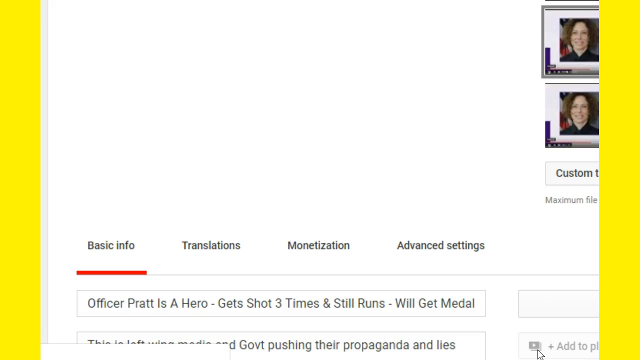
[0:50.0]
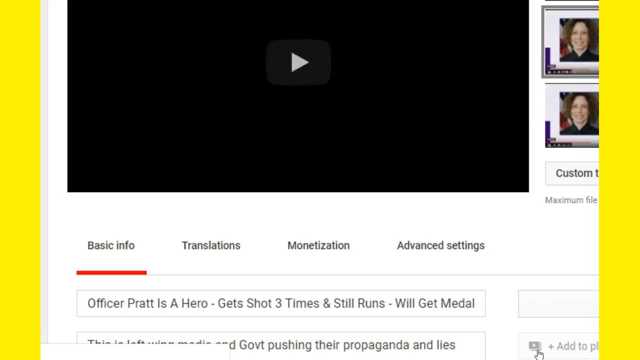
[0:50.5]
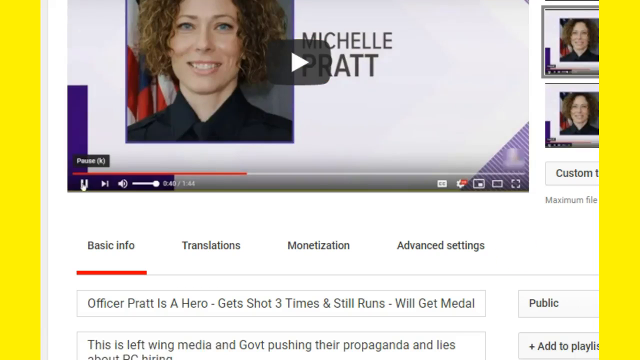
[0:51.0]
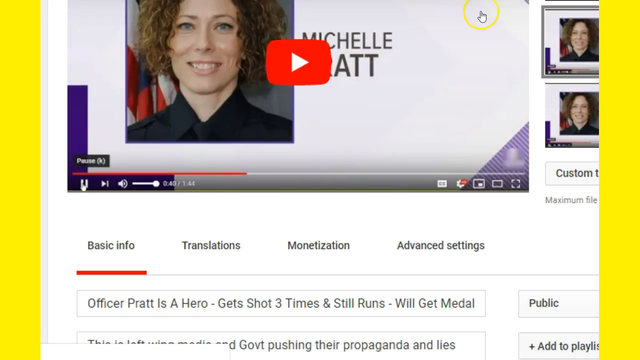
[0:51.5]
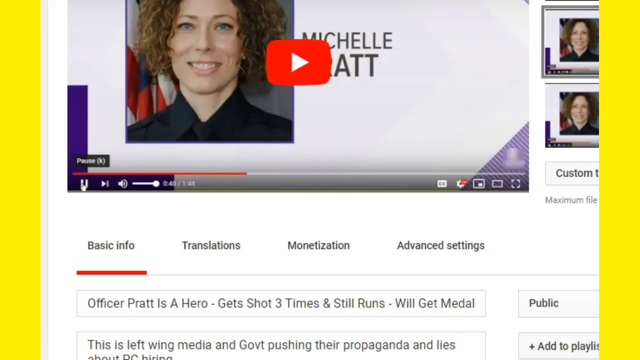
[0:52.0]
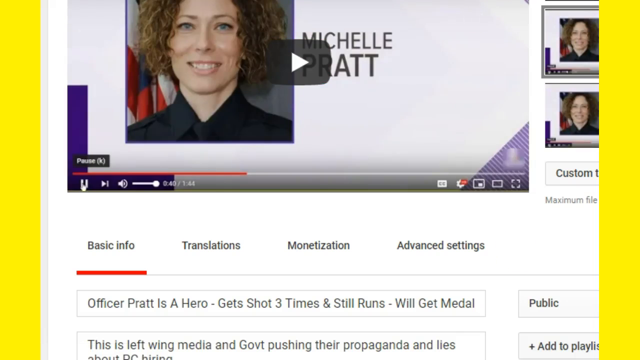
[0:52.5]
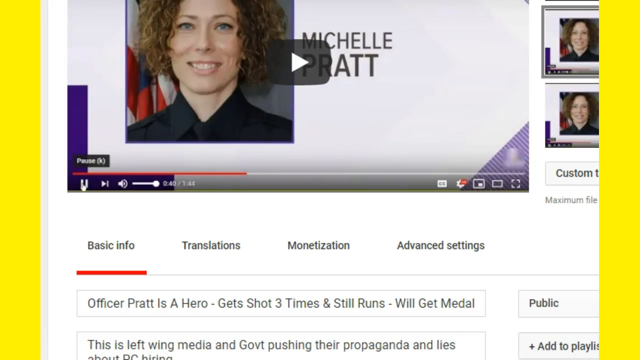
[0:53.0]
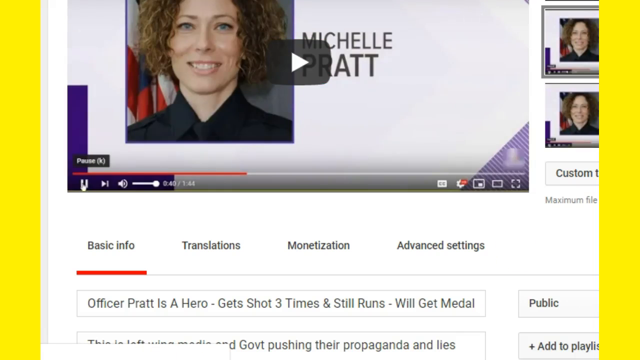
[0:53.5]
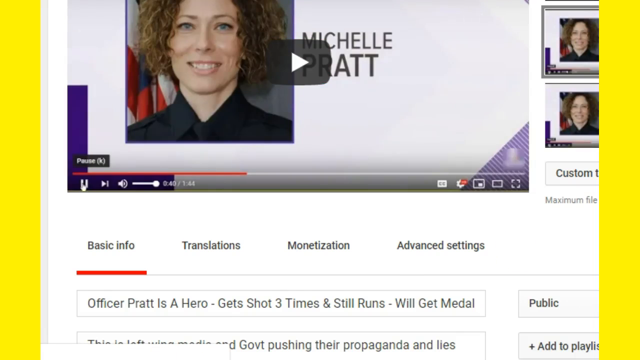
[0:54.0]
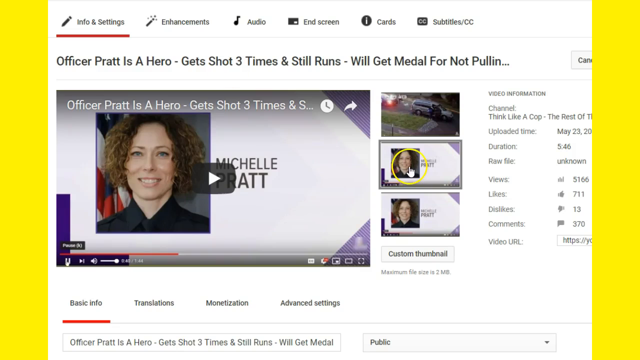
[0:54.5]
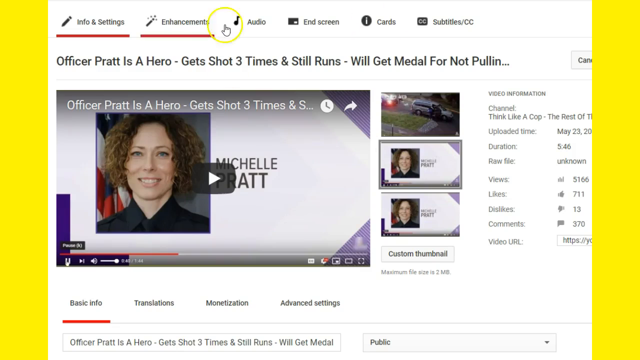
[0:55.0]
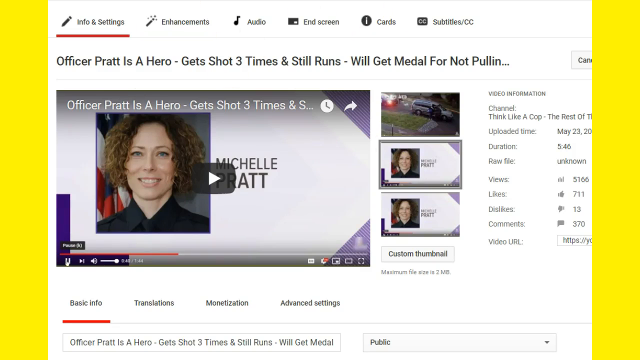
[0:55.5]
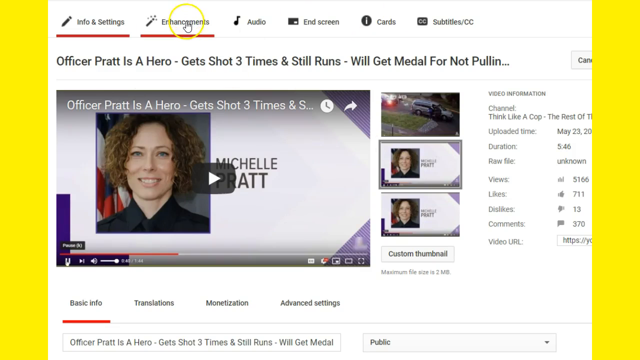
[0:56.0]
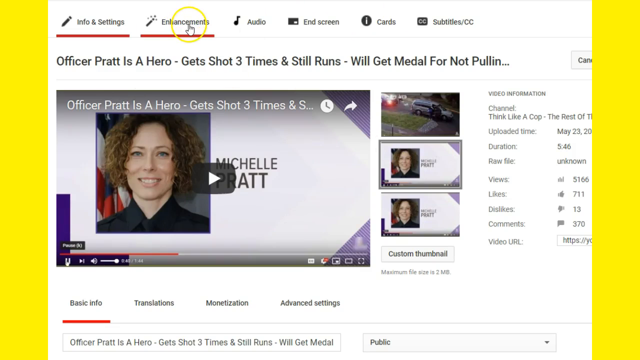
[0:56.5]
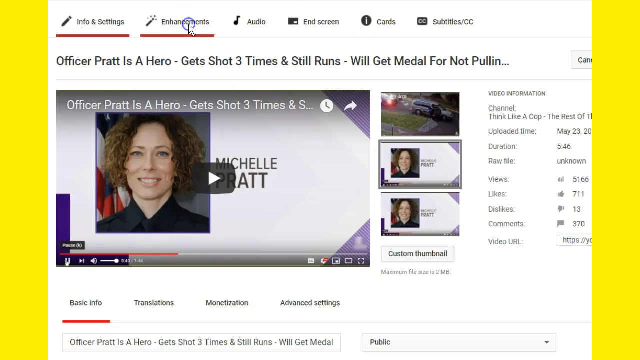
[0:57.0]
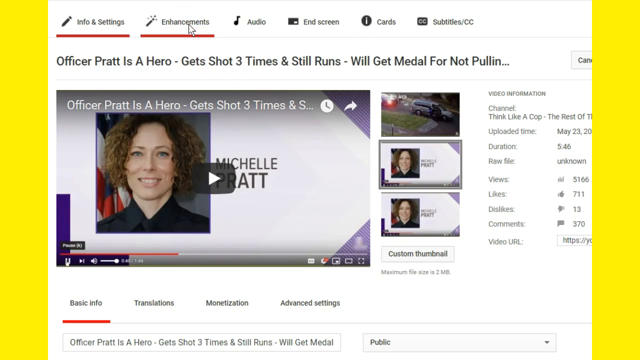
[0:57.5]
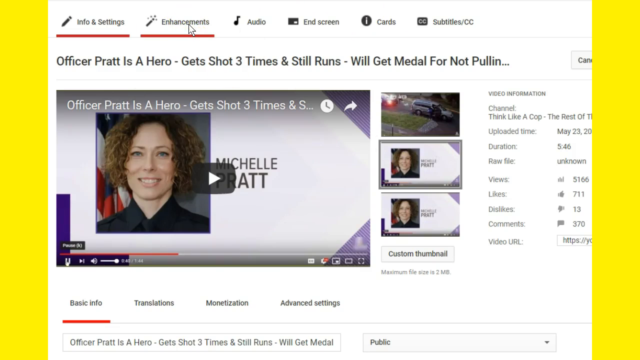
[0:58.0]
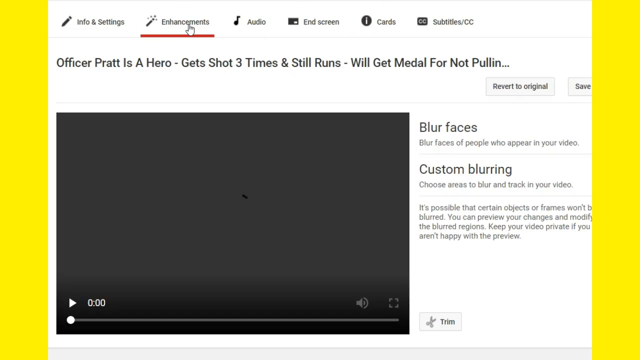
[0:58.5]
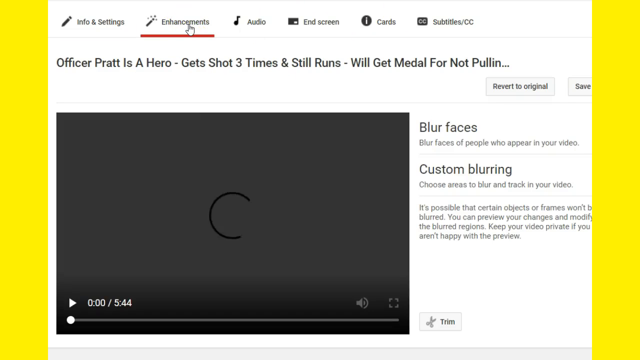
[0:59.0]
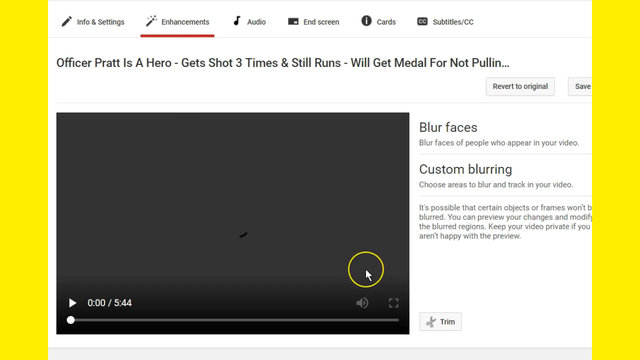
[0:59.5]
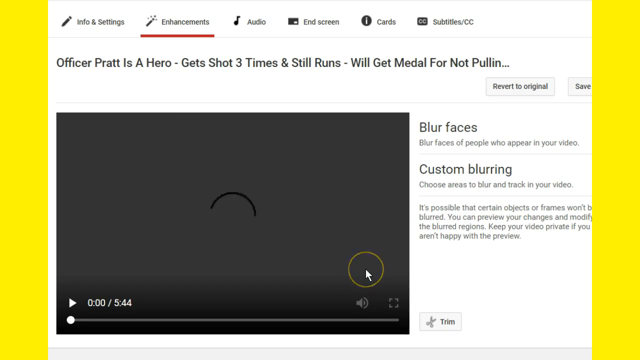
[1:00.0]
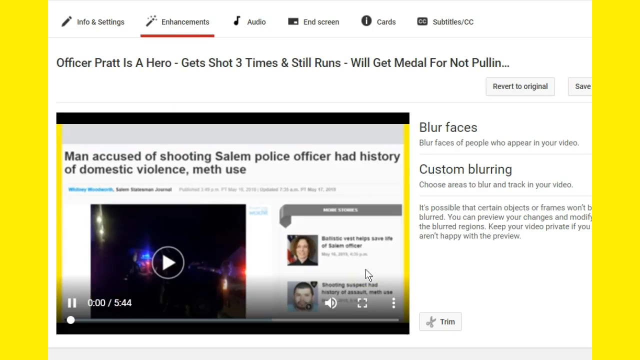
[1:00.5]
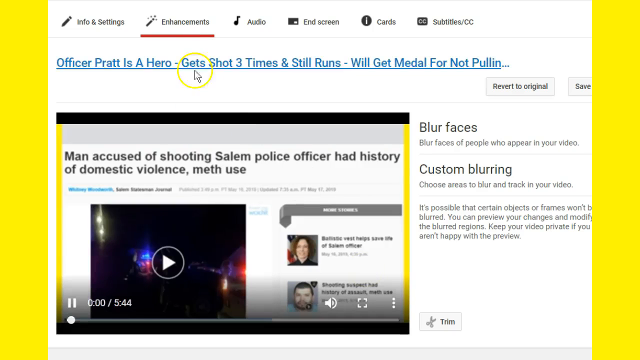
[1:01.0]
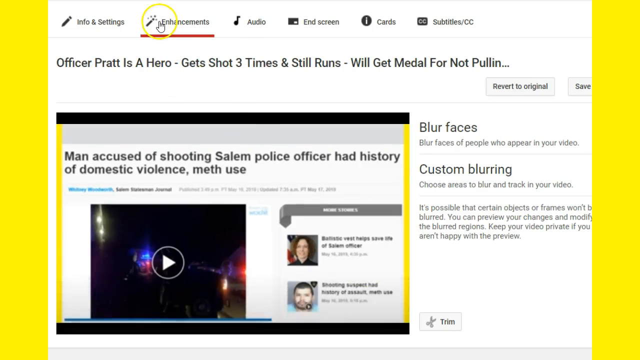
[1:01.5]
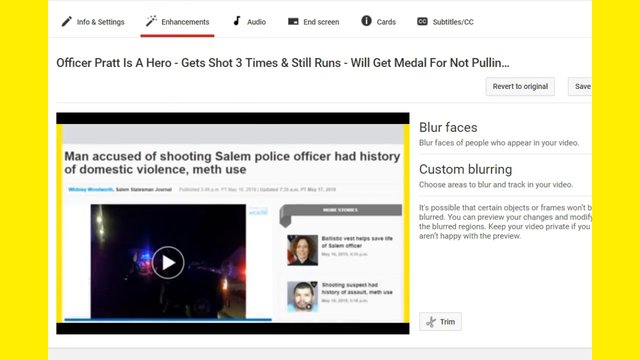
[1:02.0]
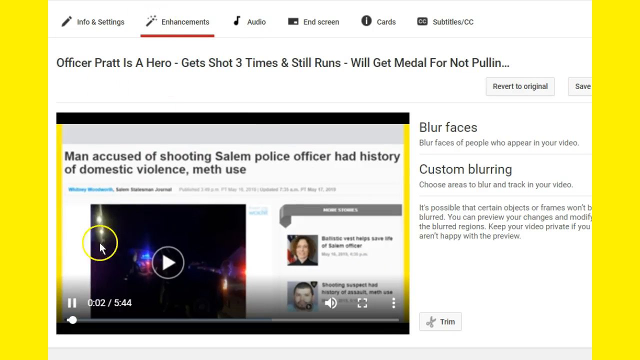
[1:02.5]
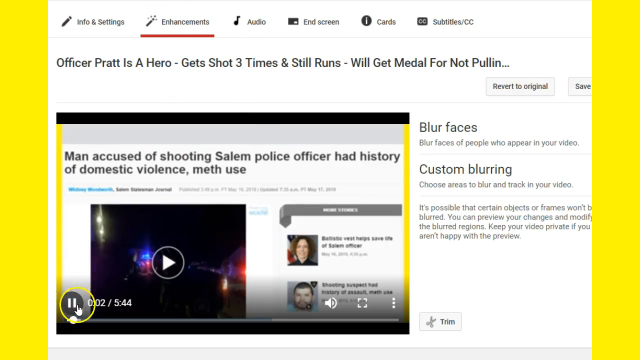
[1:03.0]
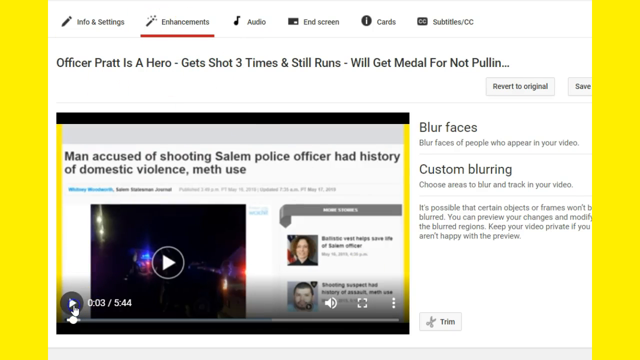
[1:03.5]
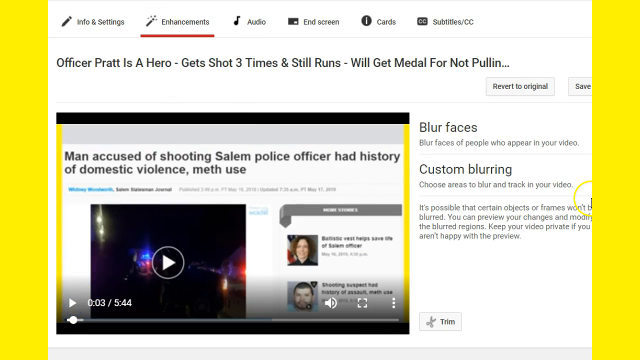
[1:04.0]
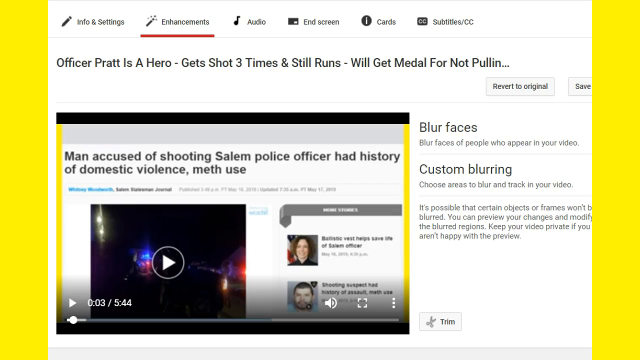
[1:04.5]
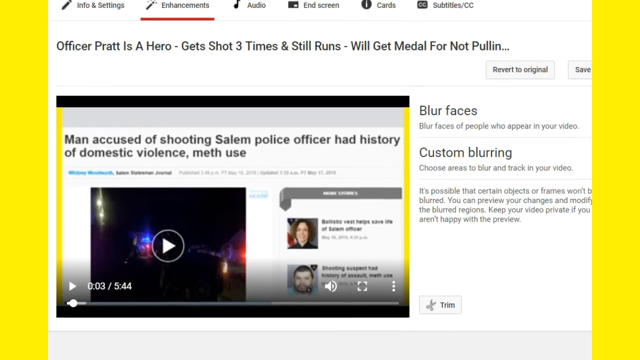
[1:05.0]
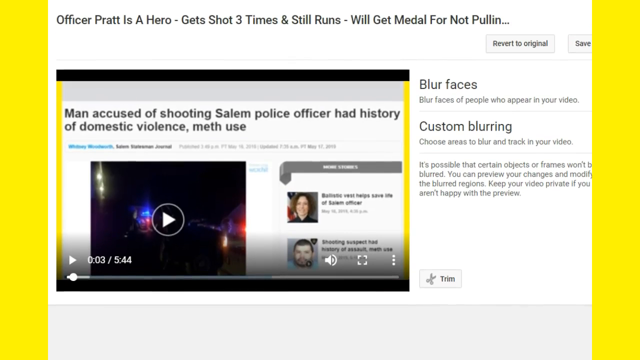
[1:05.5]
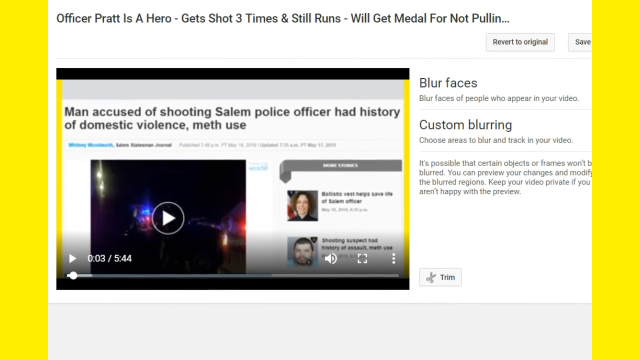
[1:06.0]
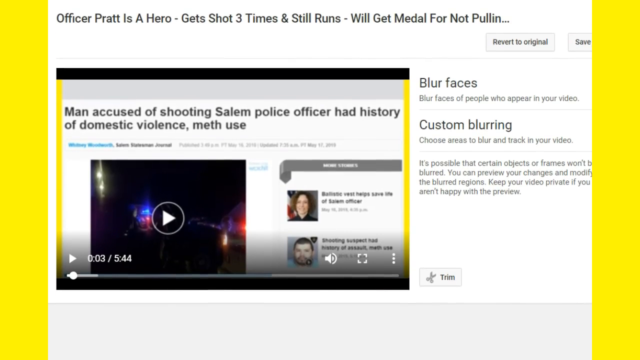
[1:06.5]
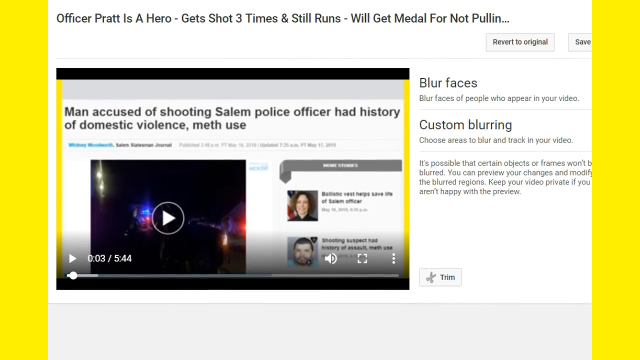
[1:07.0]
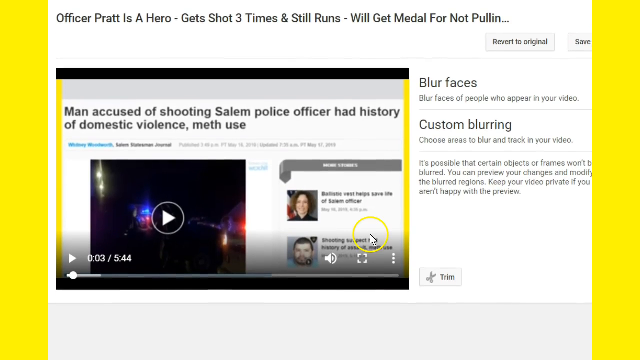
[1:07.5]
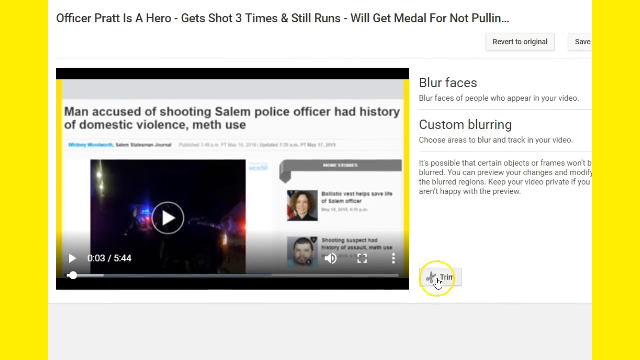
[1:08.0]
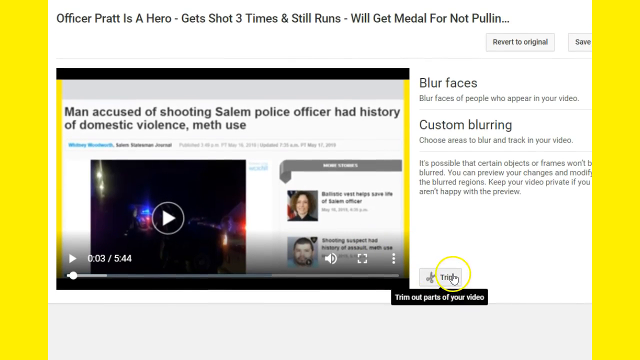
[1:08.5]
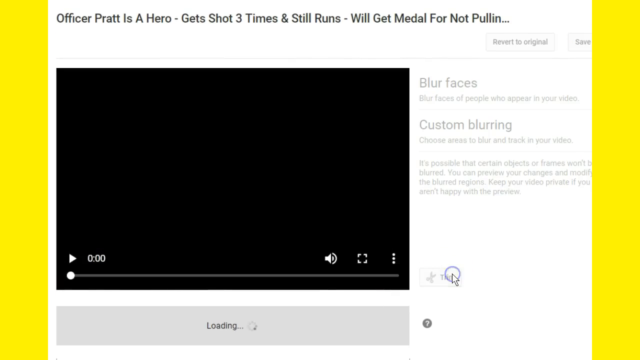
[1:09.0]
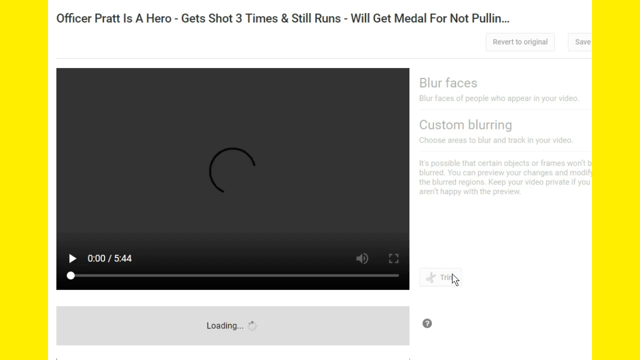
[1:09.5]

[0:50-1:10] The mouse cursor moves around, rests on the first video, and finally clicks on it, opening the video with the woman with curly hair. It then goes into another video, but the actual video content does not play or show what is happening. The page seems to be YouTube. A message reads "a man accused of shooting Salem police officer had history of domestic violence."